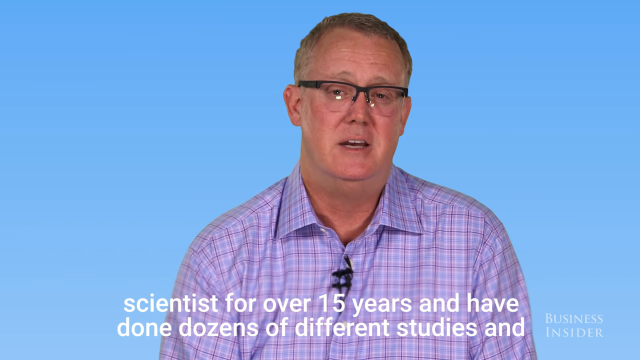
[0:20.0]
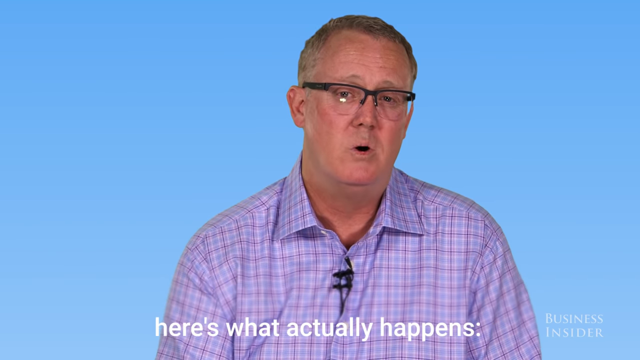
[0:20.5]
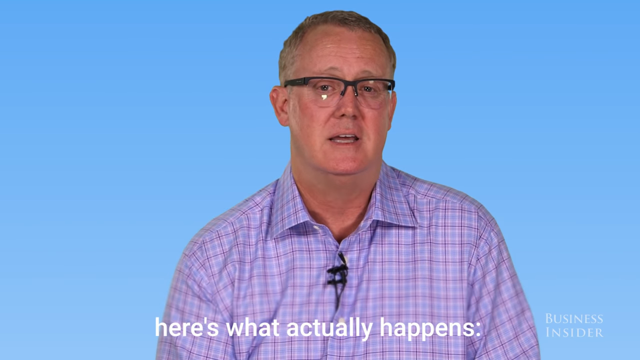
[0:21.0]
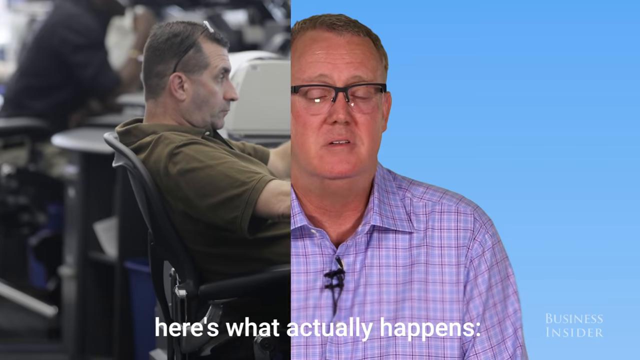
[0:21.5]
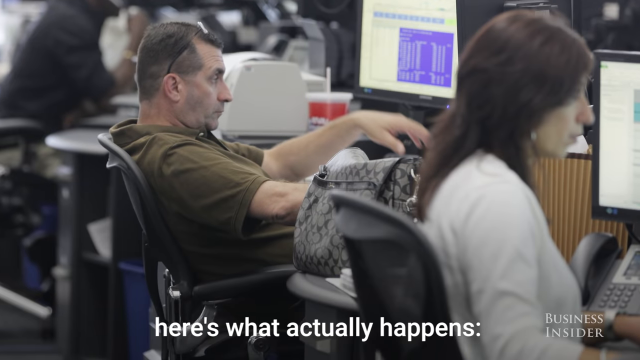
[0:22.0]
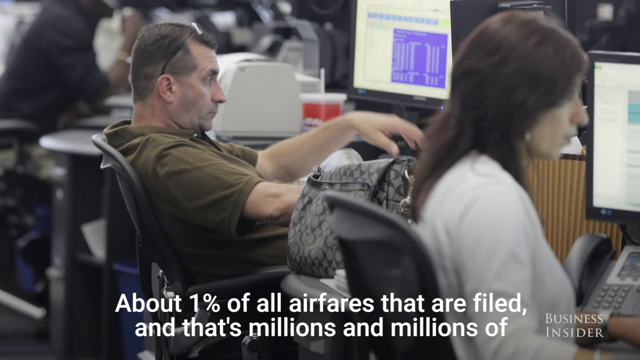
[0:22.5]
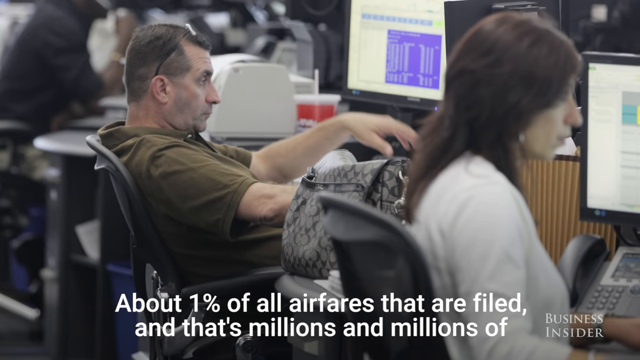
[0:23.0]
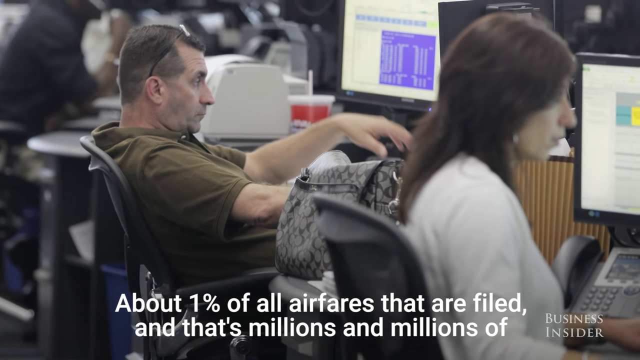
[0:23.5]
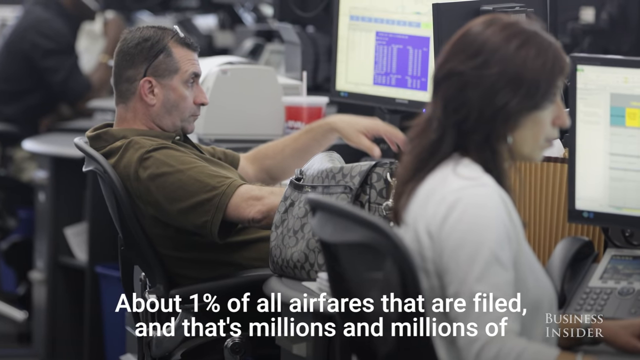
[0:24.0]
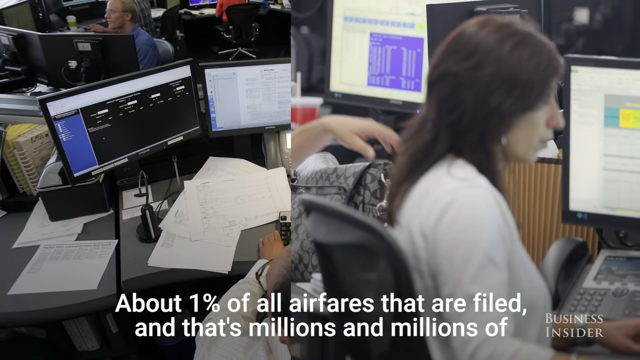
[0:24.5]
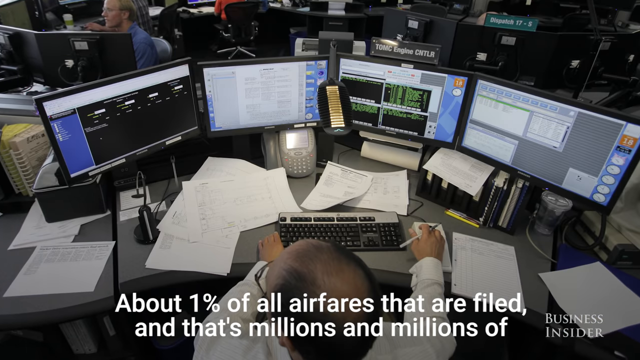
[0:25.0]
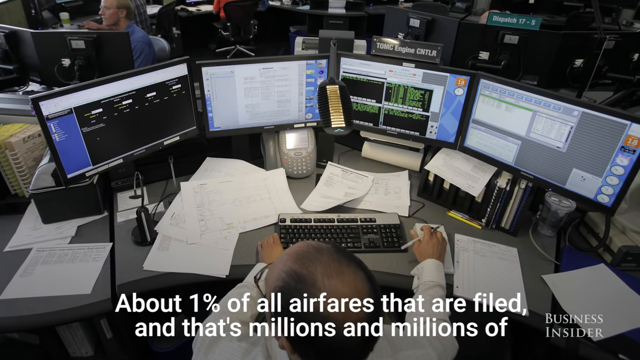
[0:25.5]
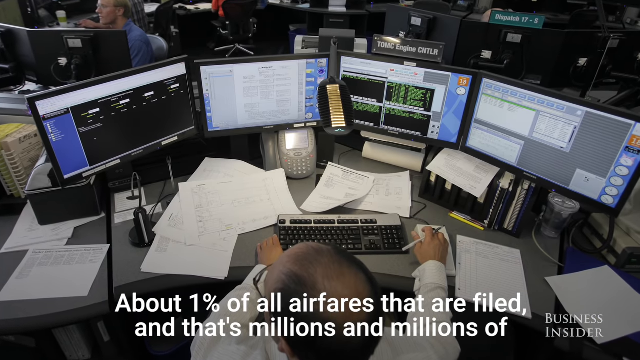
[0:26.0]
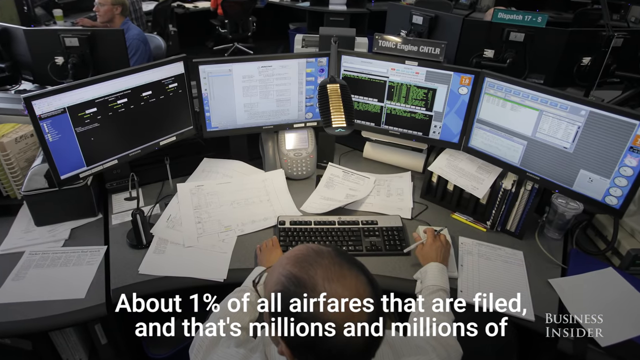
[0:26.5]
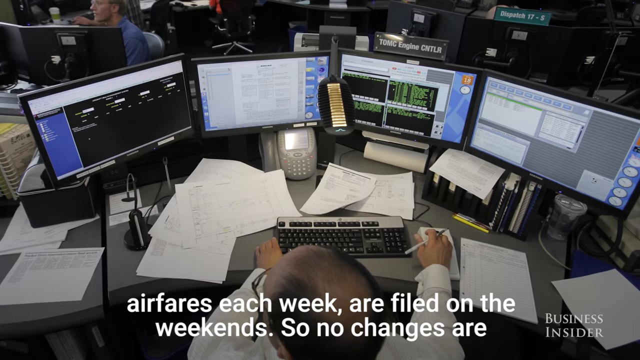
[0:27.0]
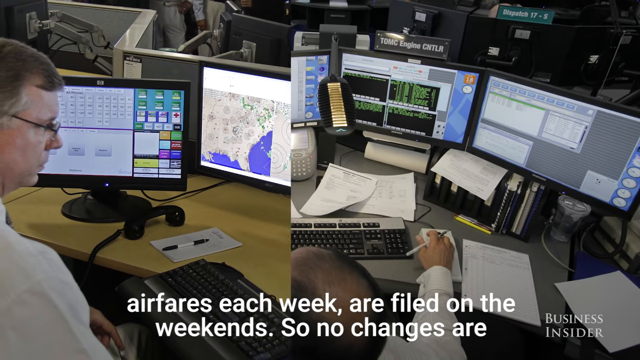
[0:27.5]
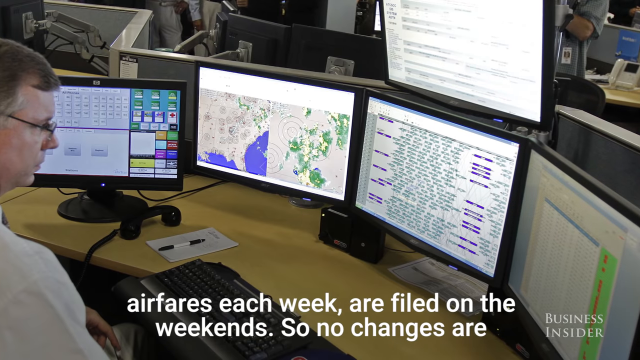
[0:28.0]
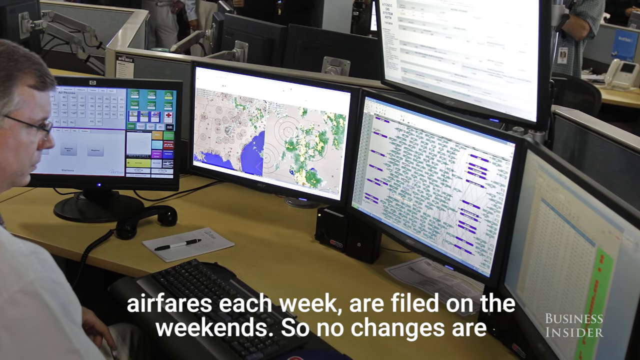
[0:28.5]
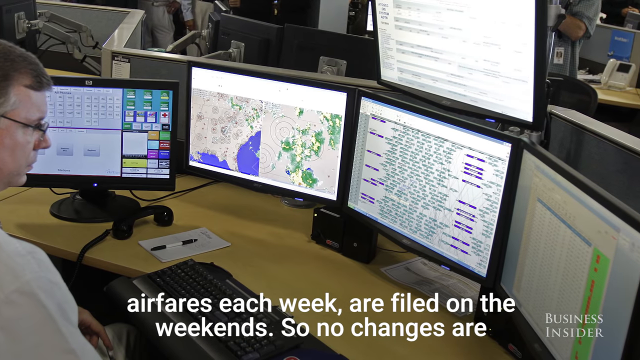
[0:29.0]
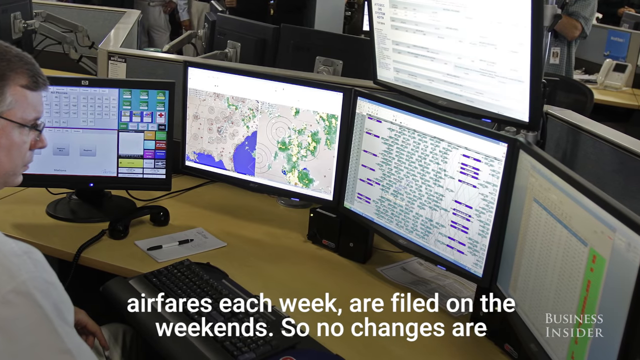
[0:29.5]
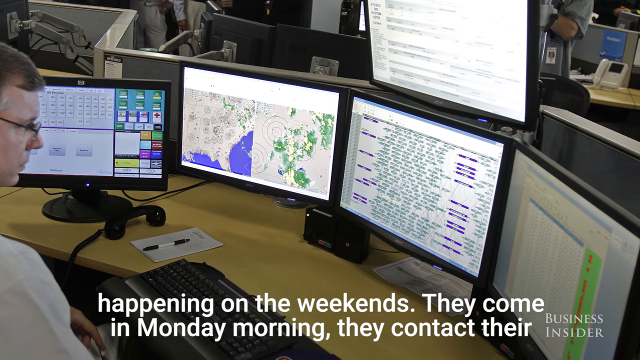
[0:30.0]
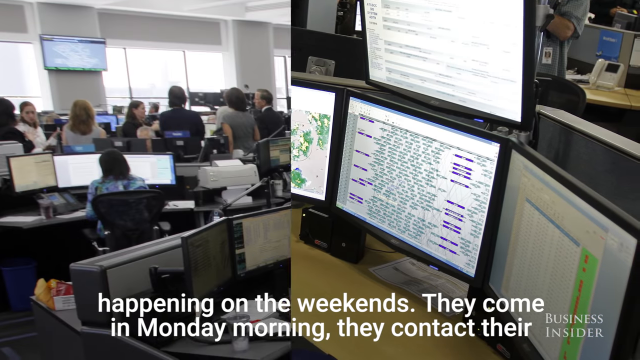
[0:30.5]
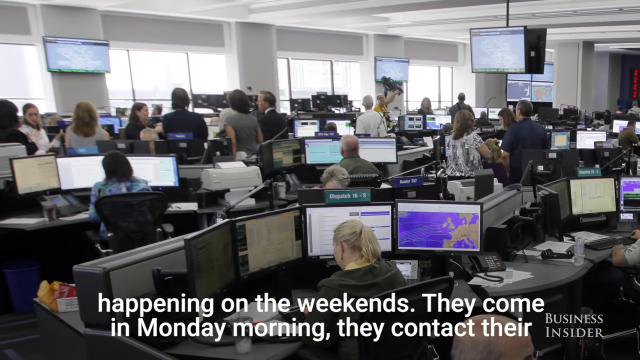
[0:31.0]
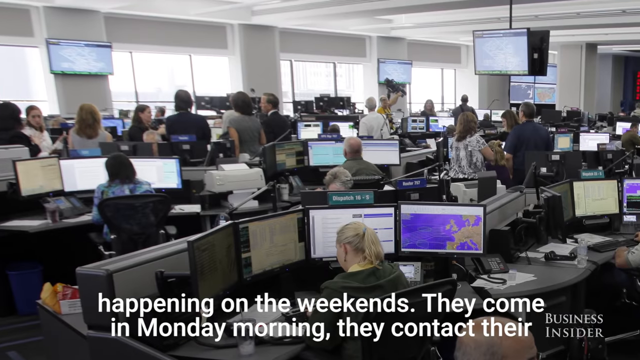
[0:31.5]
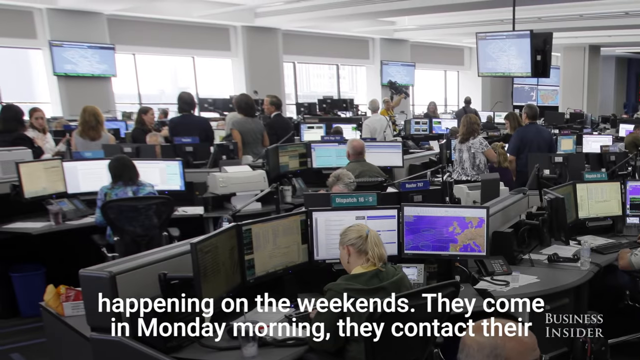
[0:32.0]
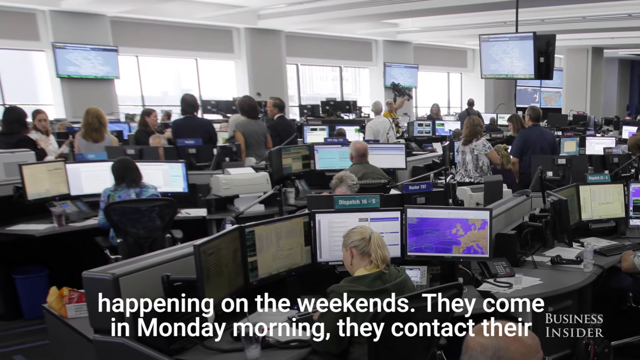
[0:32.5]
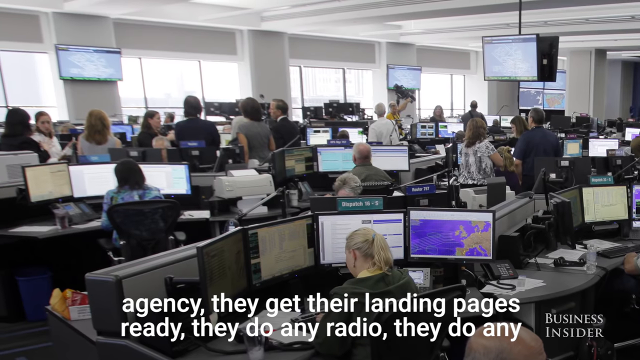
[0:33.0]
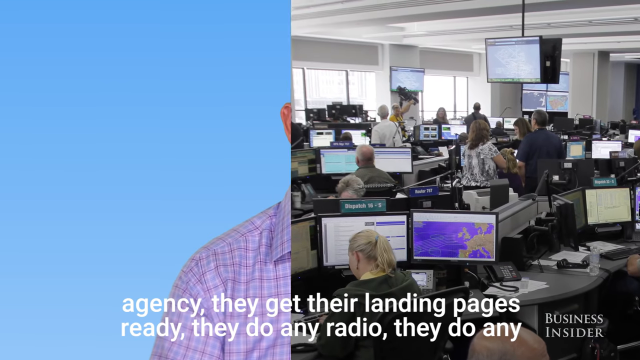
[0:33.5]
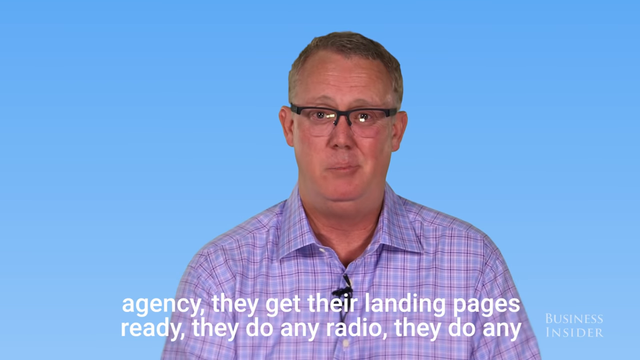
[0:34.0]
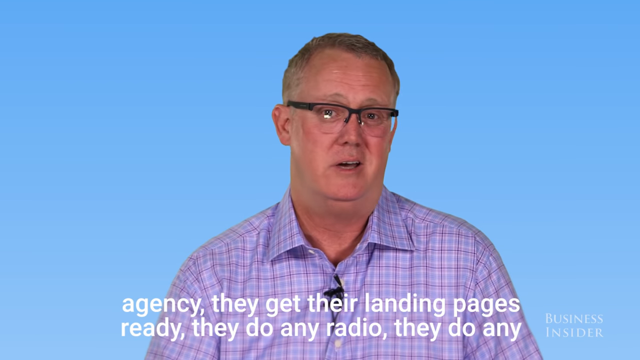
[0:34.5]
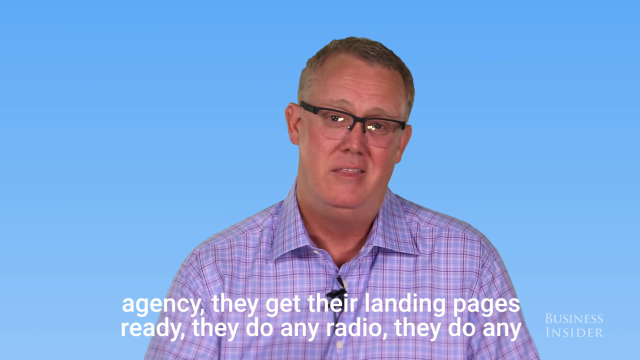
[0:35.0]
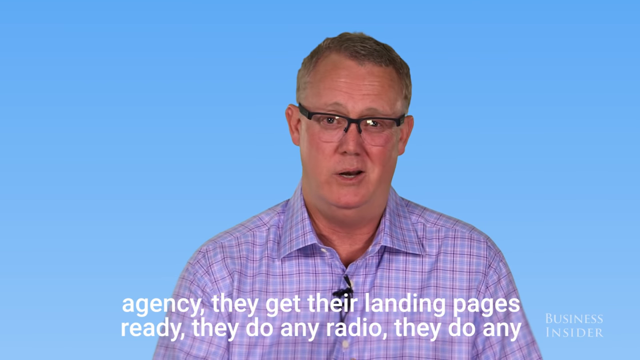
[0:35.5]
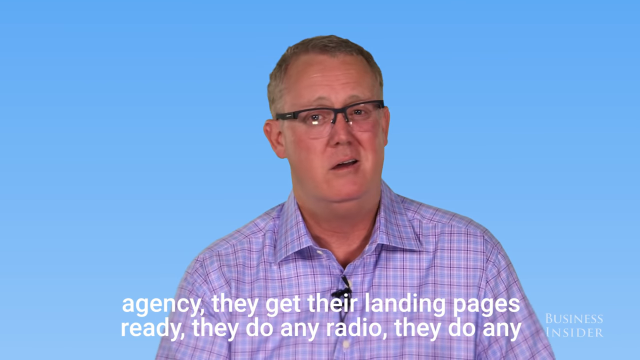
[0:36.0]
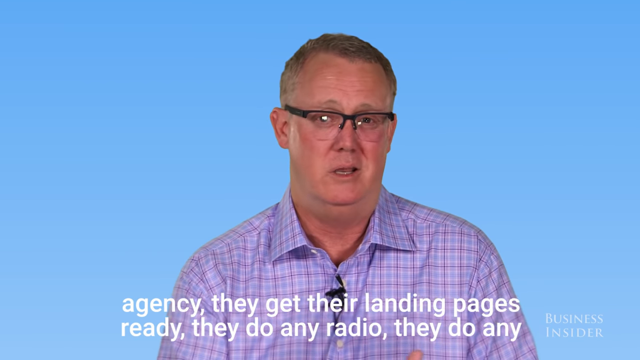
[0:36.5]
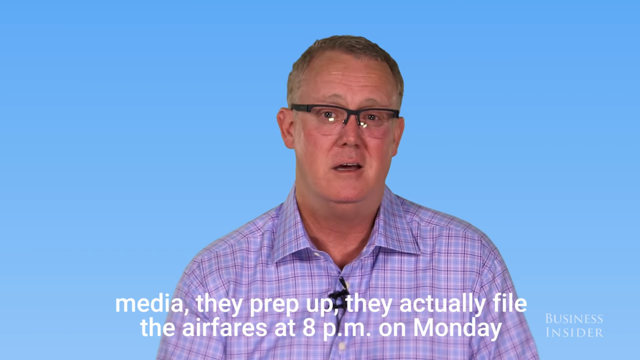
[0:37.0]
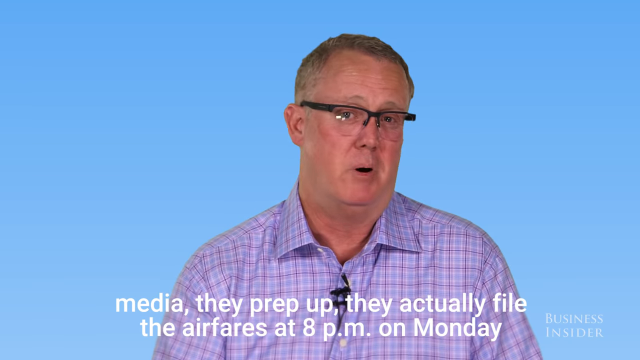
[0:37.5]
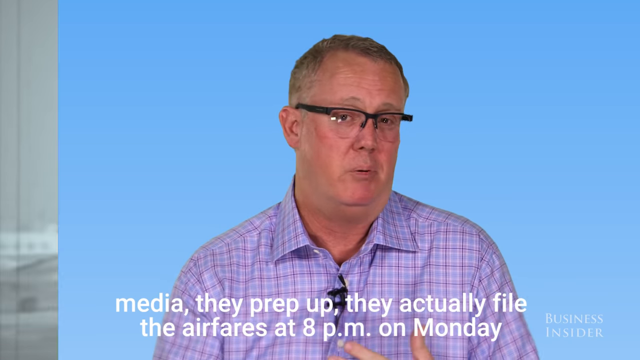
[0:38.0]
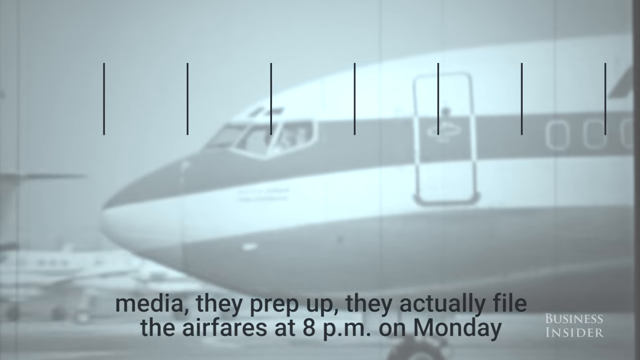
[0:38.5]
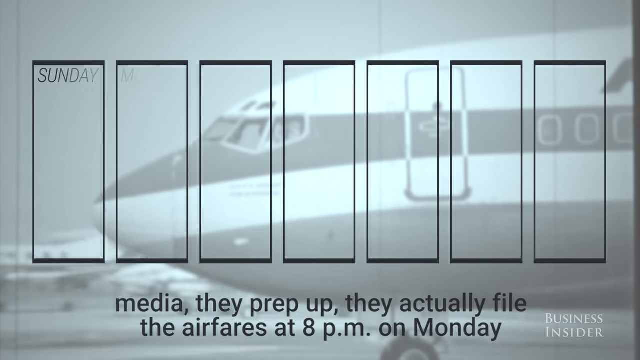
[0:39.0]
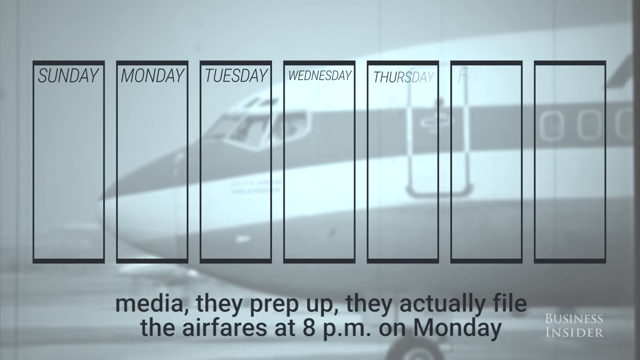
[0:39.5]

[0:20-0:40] In this Business Insider video, an adult Caucasian man gives an interview about the best time to buy airfare tickets for the lowest prices. White subtitles at the bottom of the screen read: "scientist for over 15 years and have done dozens of different studies and here's what actually happens. About 1% of all airfares that are filed and that's millions and millions of airfares each week are filed on the weekends. So what's happening on the weekends, they come in Monday morning, they contact their agency, they get the latest landing pages ready, they do any radio, they do any media, they prep up, they actually file the airfares at 8pm on Monday." Various shots show people sitting at desks in an office, each with a computer setup of three monitors in front of them.